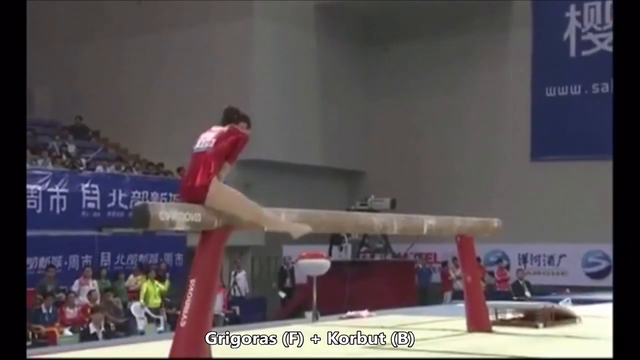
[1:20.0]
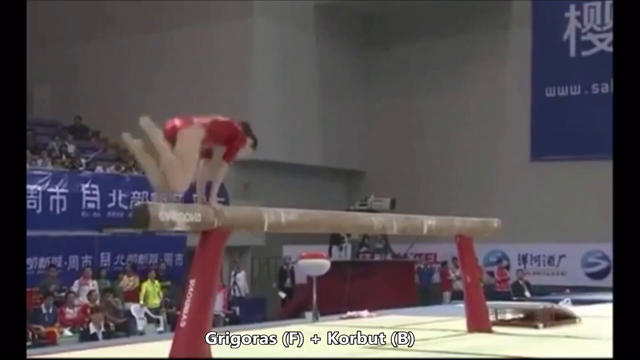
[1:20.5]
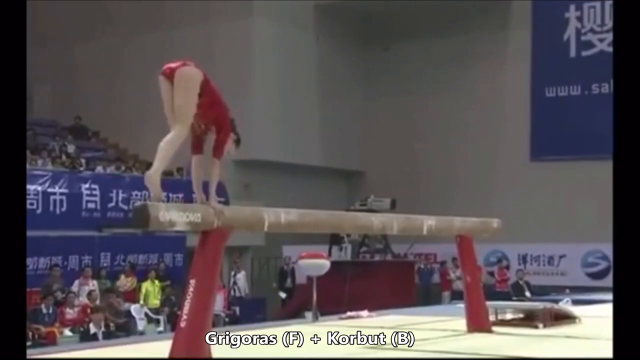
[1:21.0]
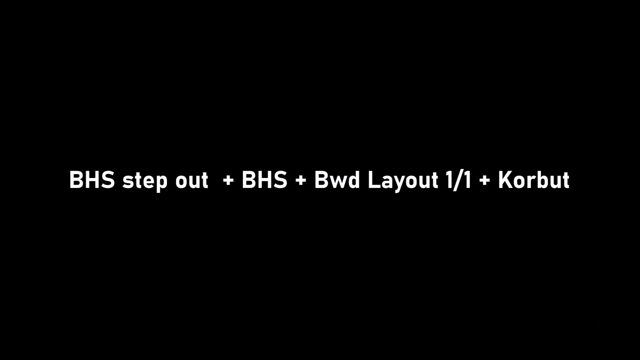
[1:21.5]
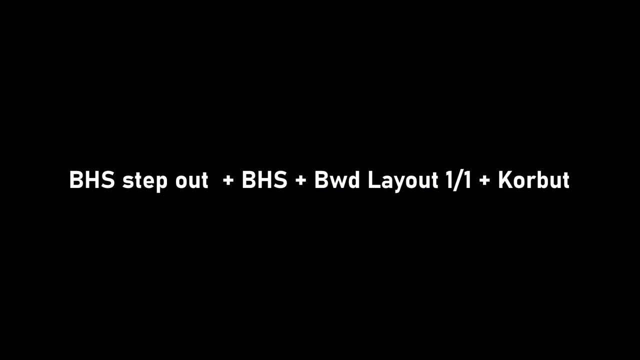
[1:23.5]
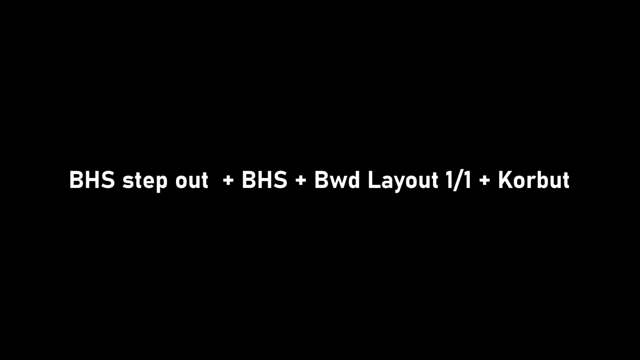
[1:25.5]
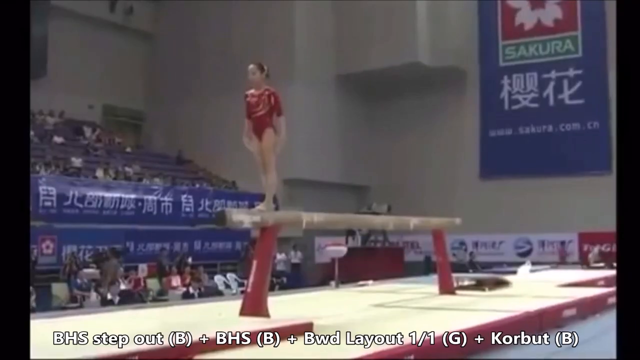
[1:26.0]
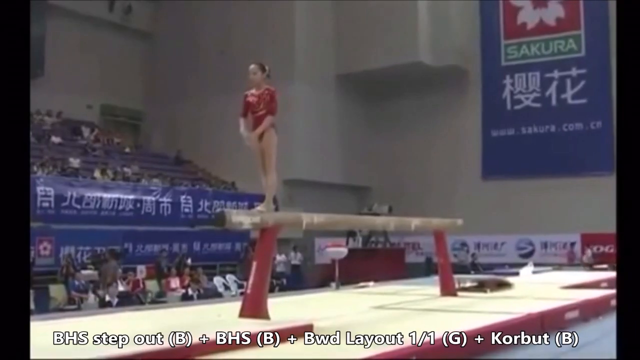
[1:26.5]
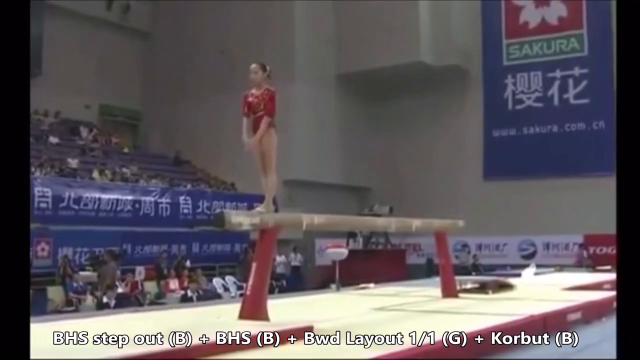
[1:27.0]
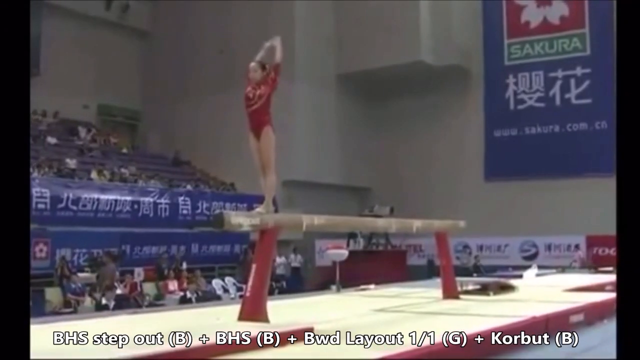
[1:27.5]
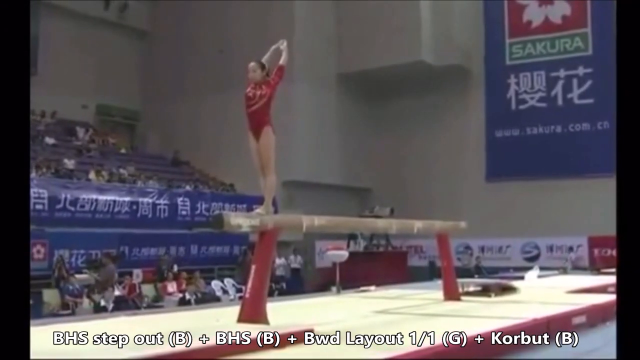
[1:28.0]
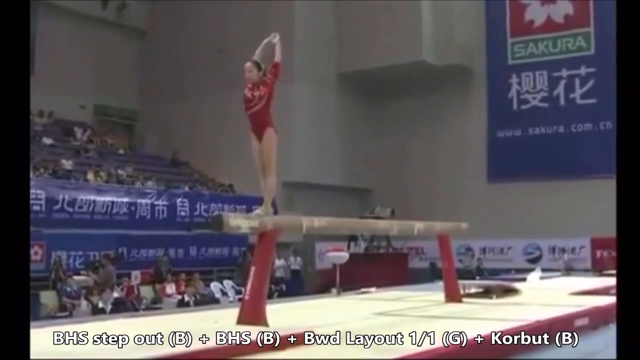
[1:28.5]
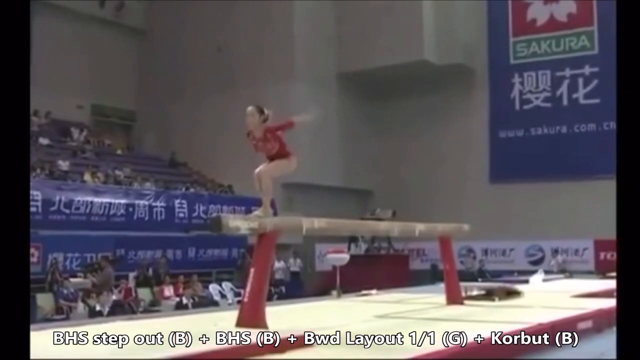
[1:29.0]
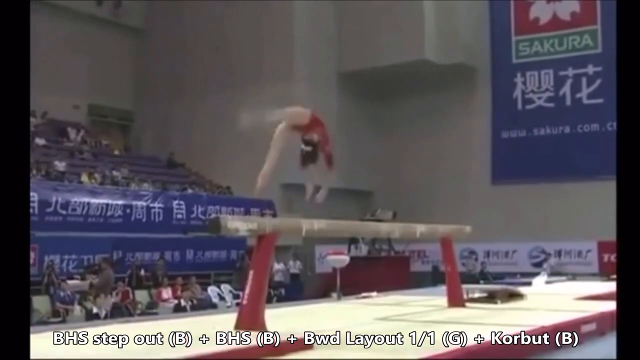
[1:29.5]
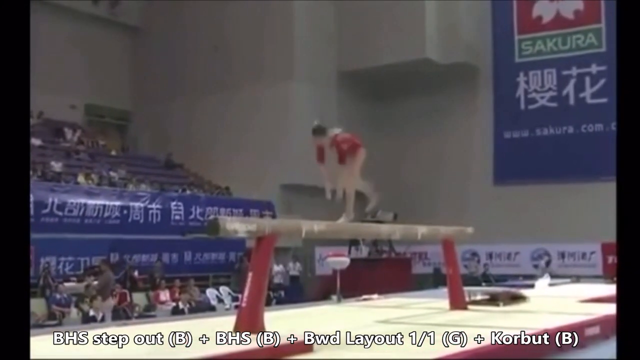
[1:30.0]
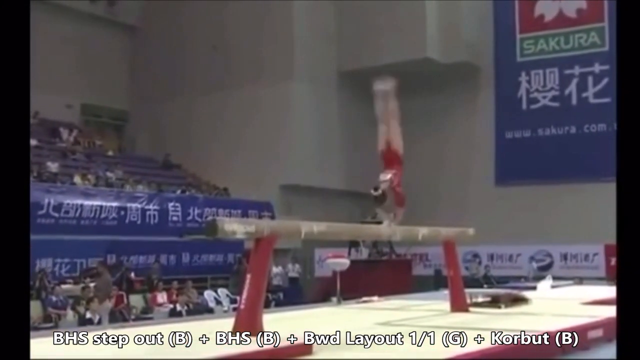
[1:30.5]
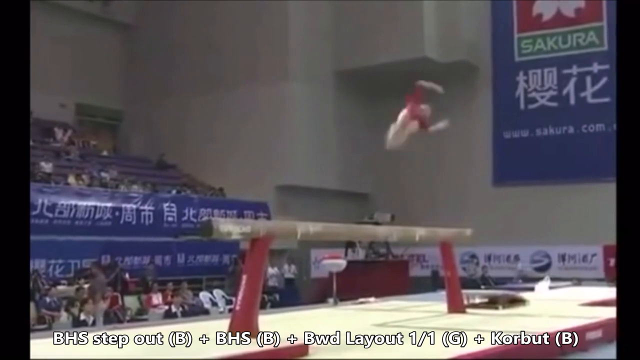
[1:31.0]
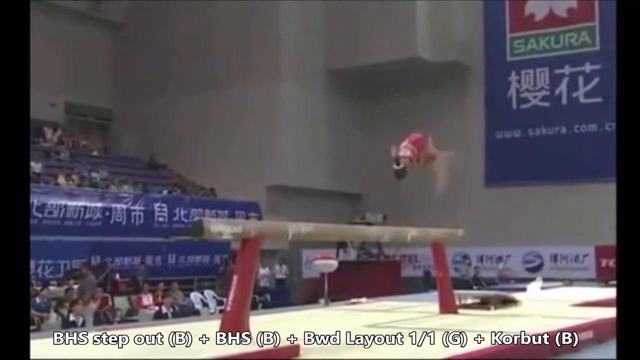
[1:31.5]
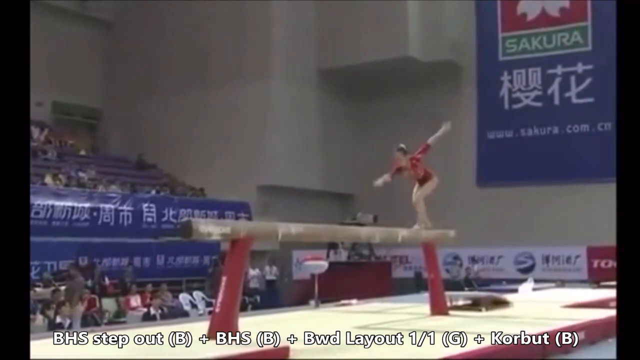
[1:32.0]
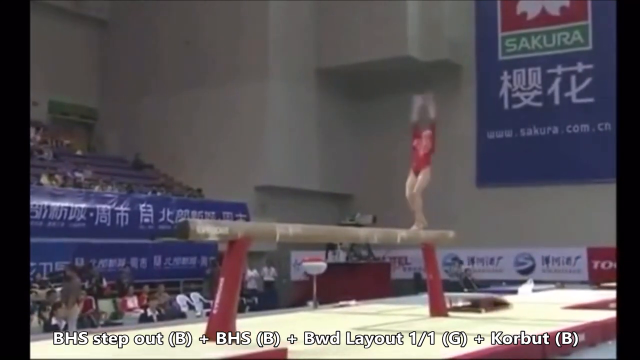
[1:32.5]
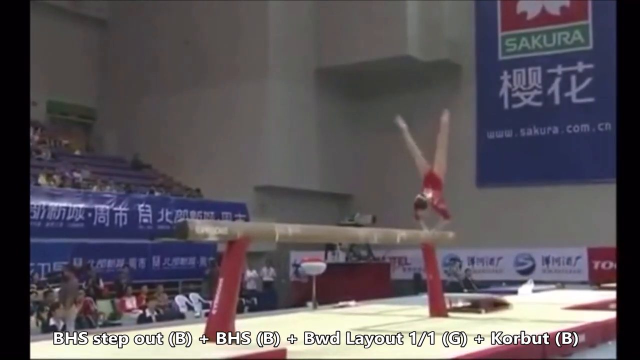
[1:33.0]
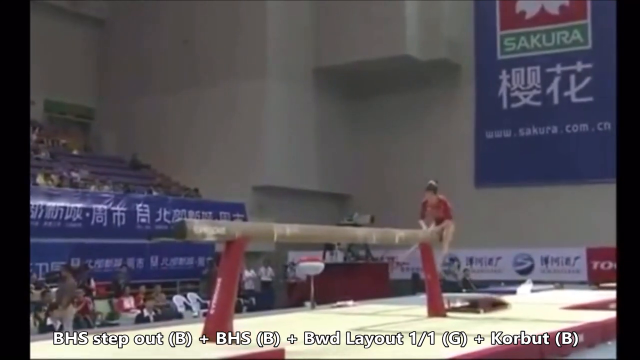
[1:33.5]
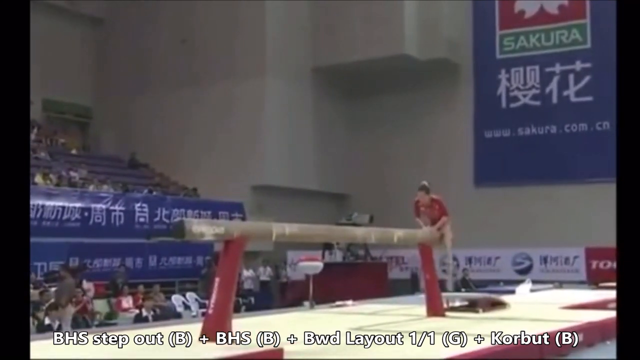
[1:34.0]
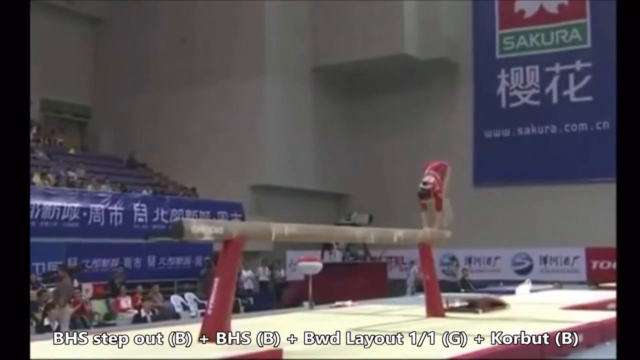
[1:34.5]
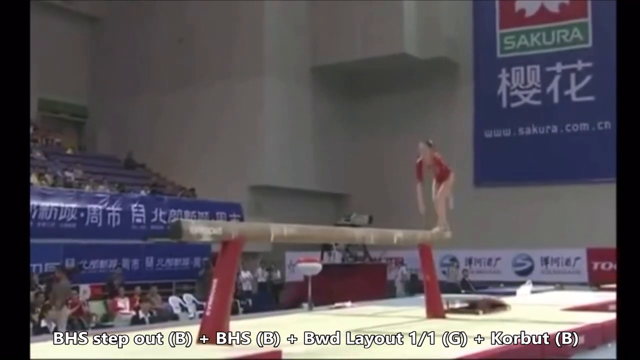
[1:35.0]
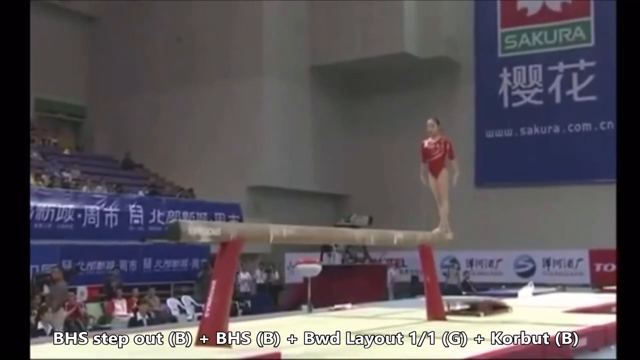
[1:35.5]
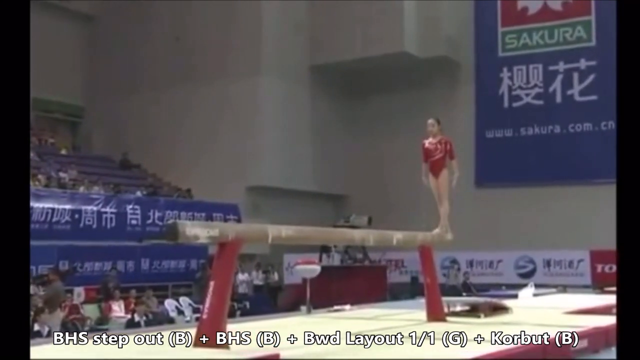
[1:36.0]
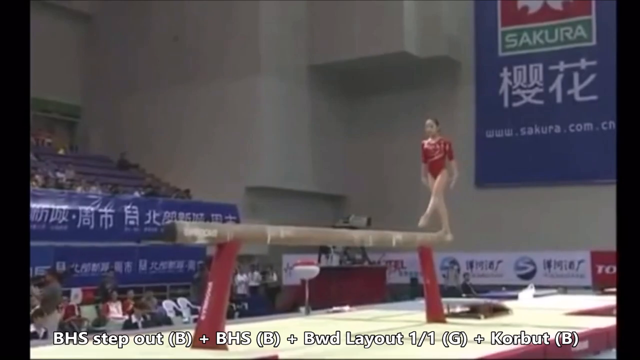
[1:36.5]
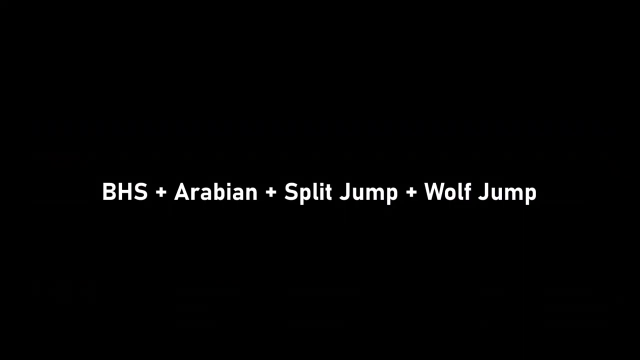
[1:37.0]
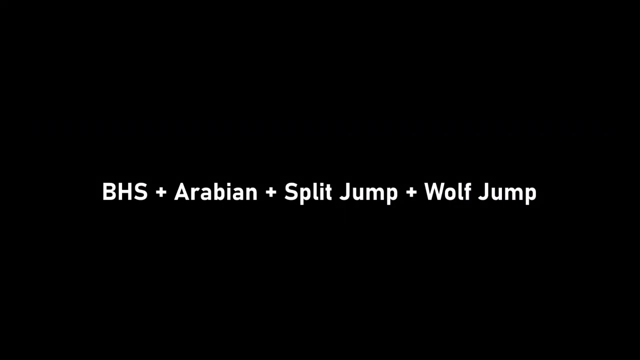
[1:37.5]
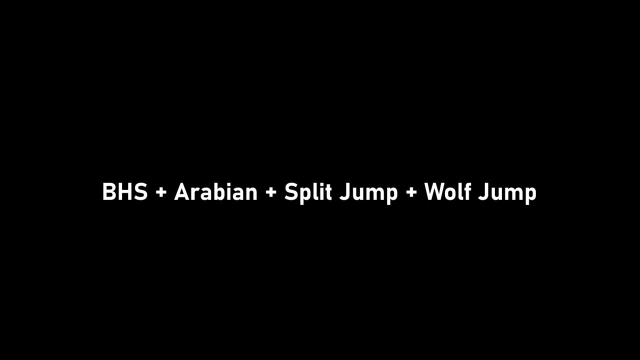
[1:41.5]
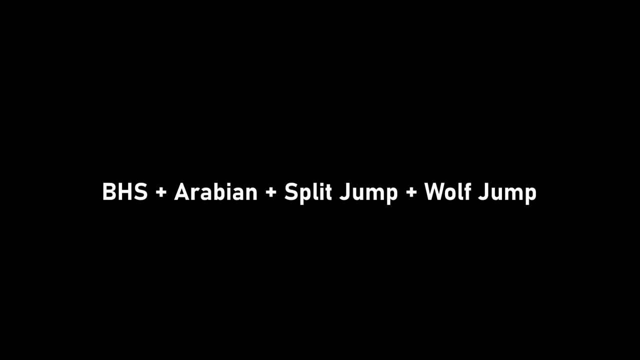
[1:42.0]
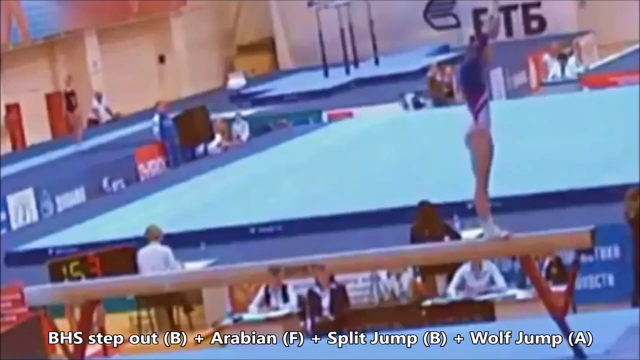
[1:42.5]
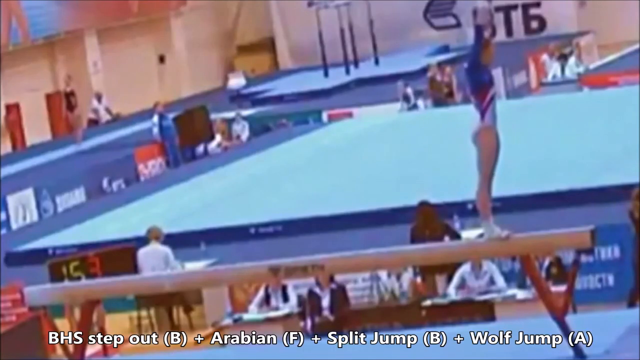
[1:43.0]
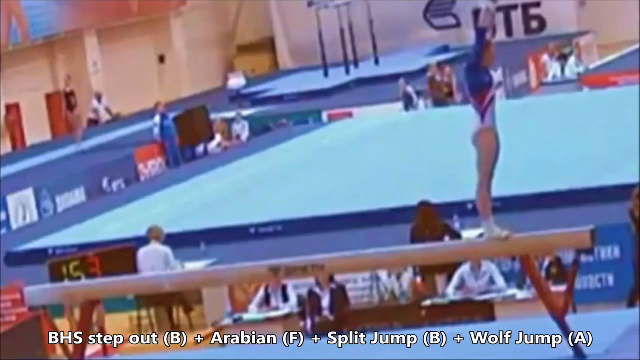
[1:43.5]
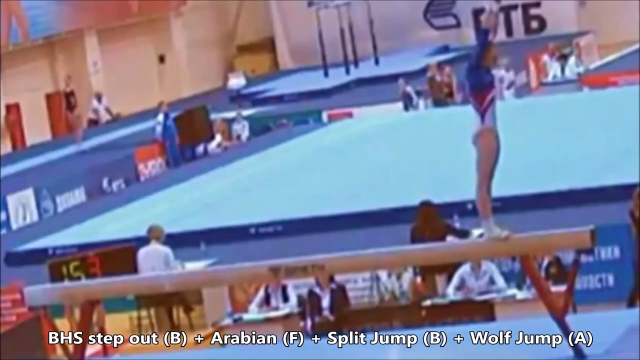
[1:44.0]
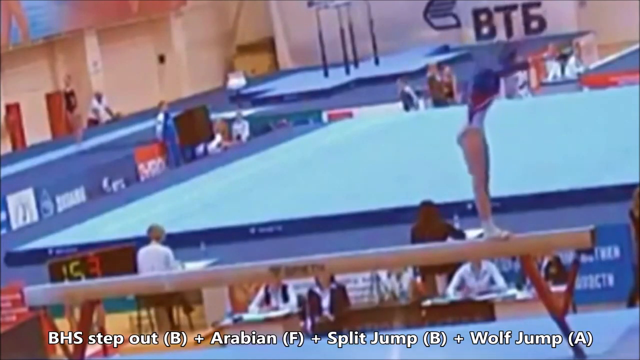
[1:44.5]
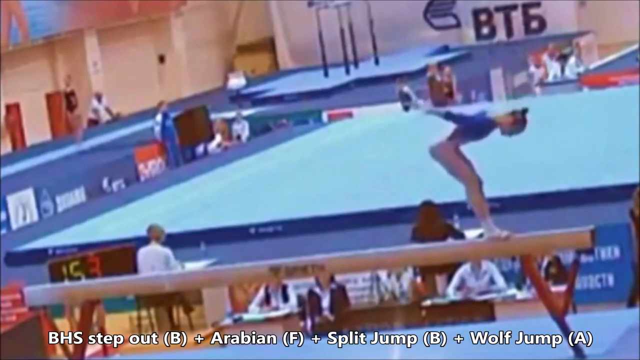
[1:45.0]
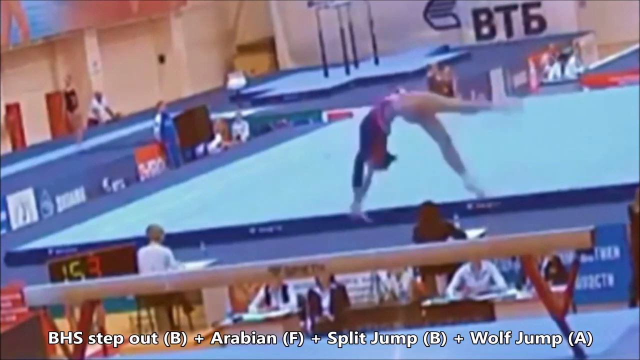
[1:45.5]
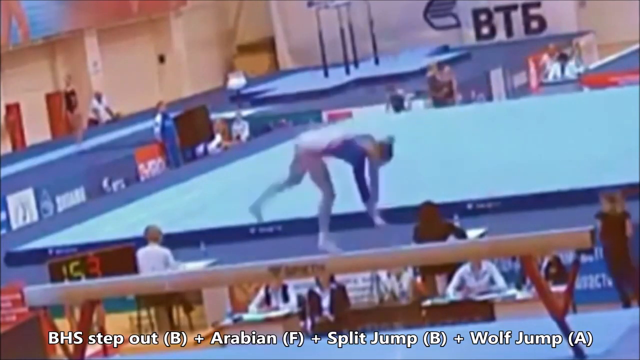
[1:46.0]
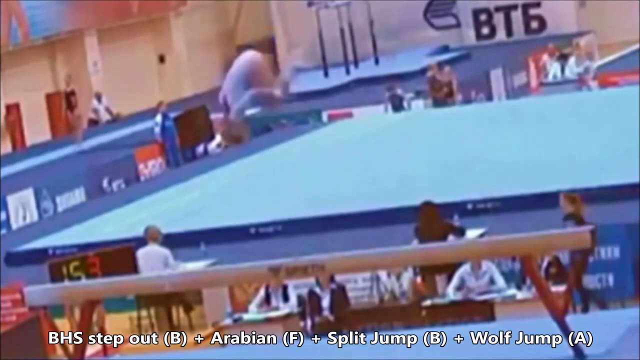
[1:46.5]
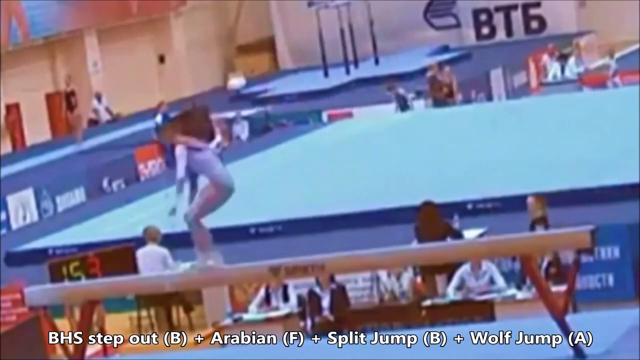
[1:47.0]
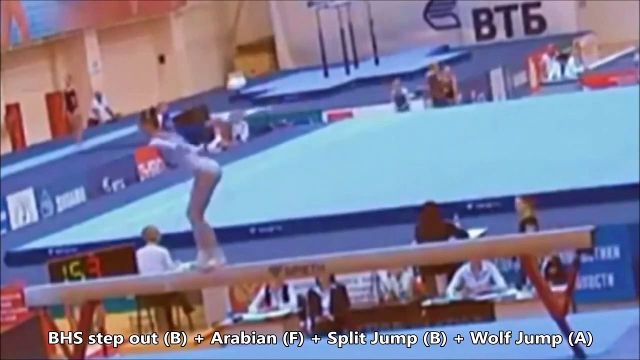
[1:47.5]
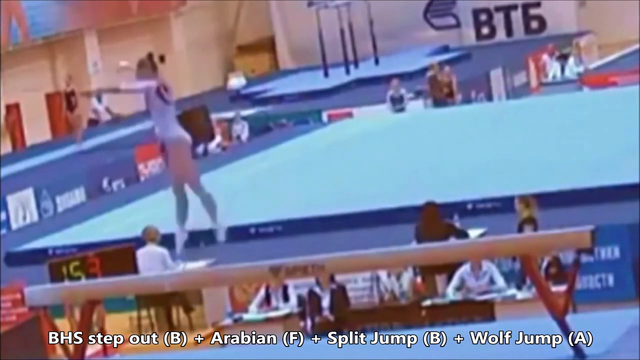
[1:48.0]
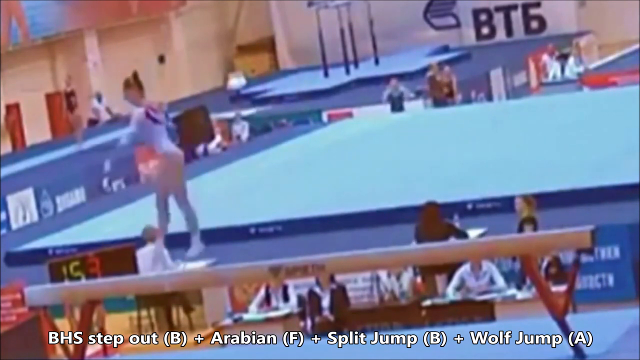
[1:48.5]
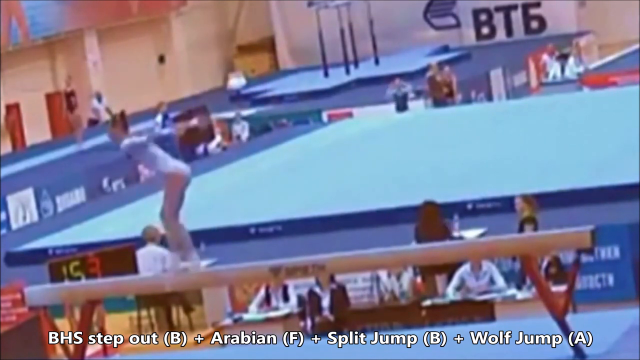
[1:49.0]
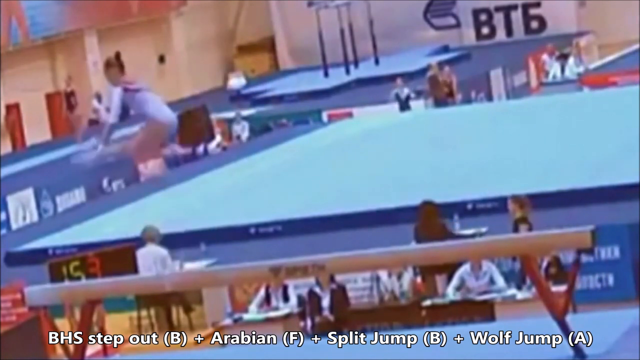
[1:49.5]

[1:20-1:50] Someone in a red leotard is shown. Asian symbols are on posters on the wall, suggesting this is not in America but more likely somewhere in Asia. The person is sitting on the left side of the beam with toes pointed and swings back up. Then the screen changes to black, and white text reads "VHS", then "step out". Next it reads "VHS + B WD layout 1/1 + Korbut". The person appears to do back flips without wobbling on the thin beam. Then text reads "BHS + Arabian + split jump + wolf jump". Next a person is shown in footage that looks kind of old, like the 80s.